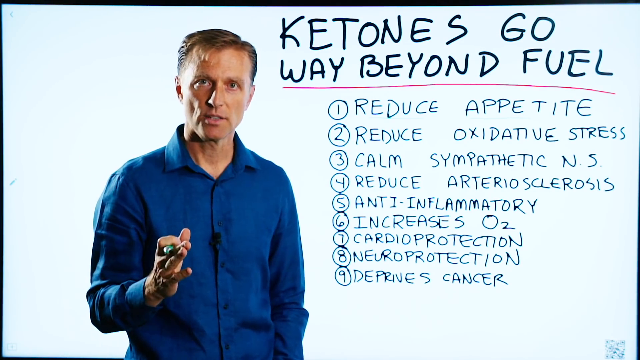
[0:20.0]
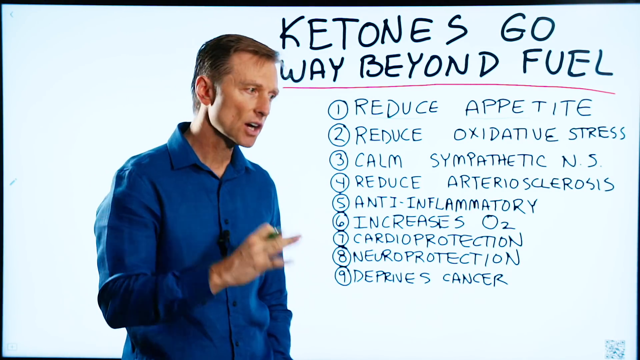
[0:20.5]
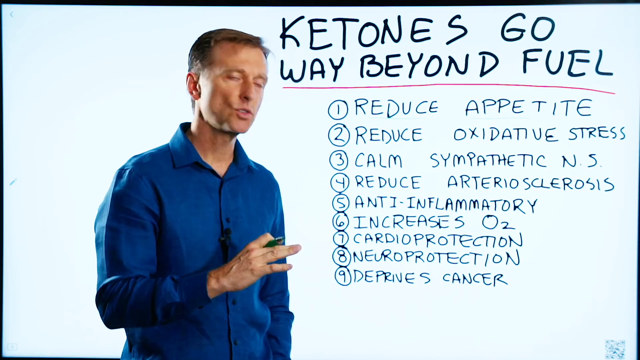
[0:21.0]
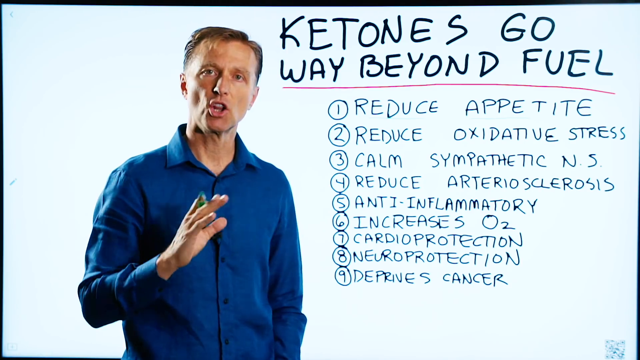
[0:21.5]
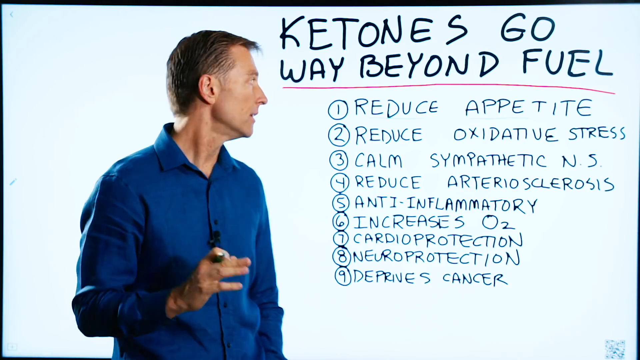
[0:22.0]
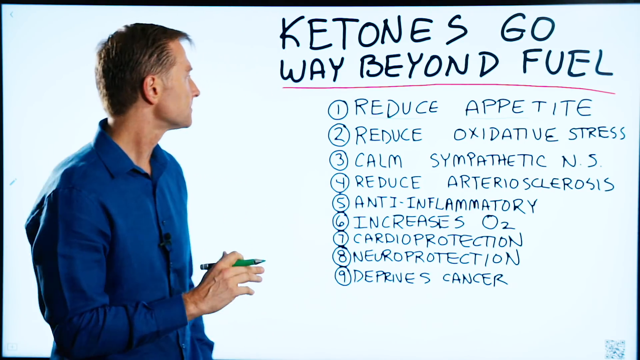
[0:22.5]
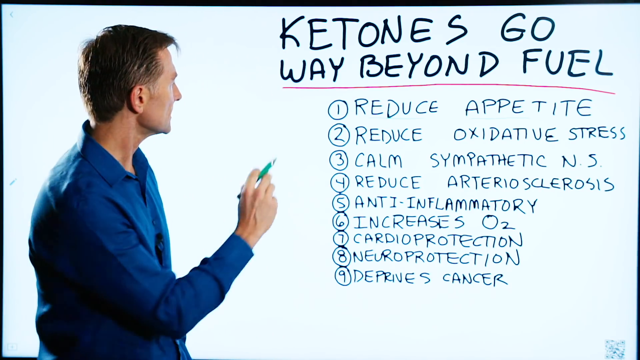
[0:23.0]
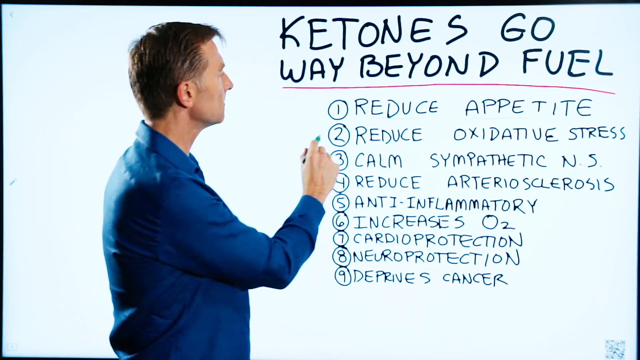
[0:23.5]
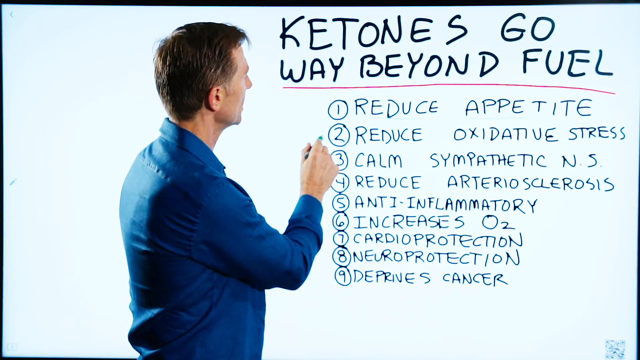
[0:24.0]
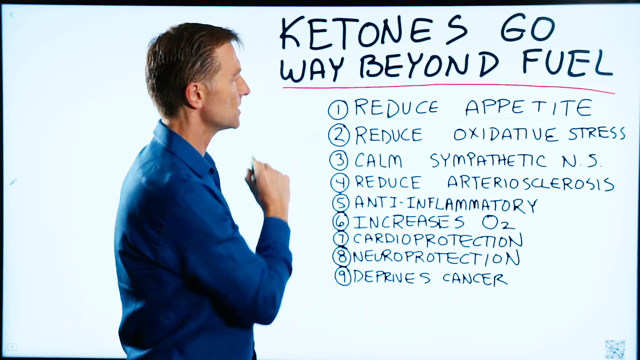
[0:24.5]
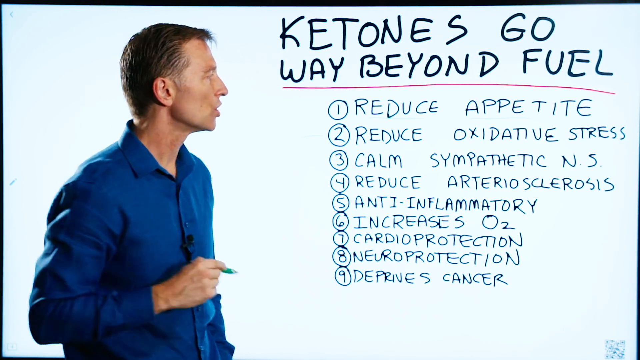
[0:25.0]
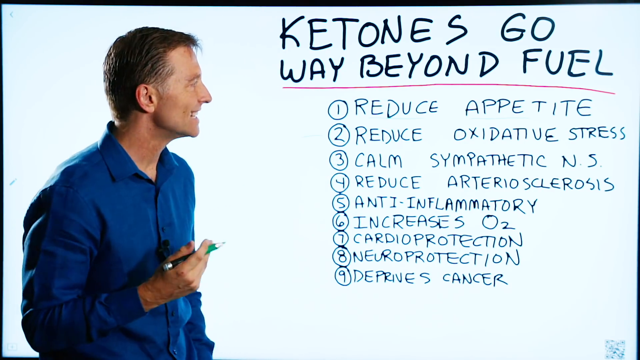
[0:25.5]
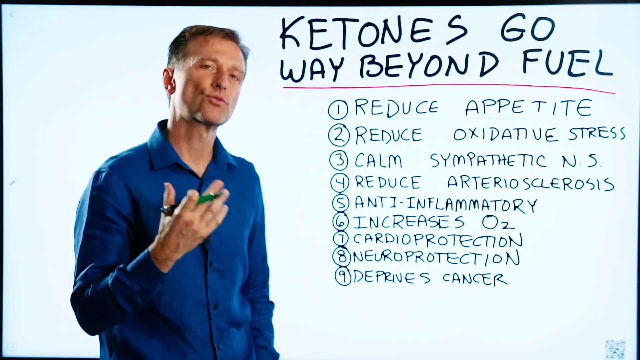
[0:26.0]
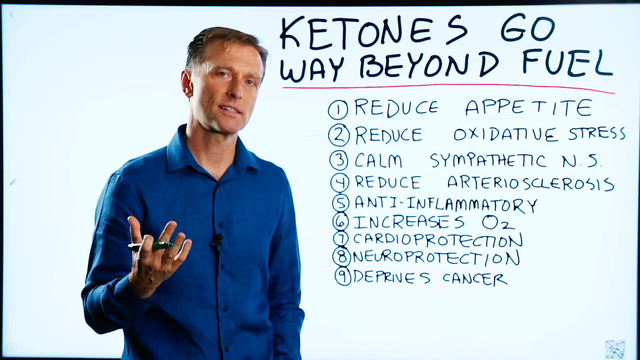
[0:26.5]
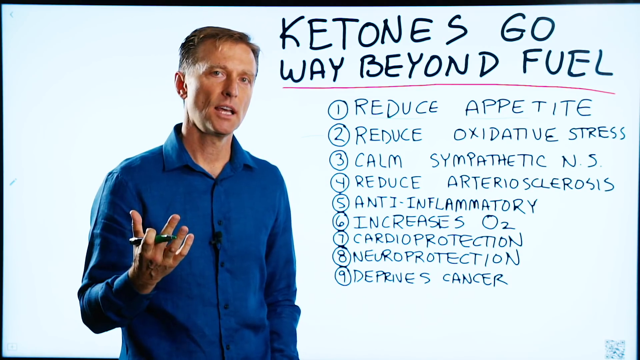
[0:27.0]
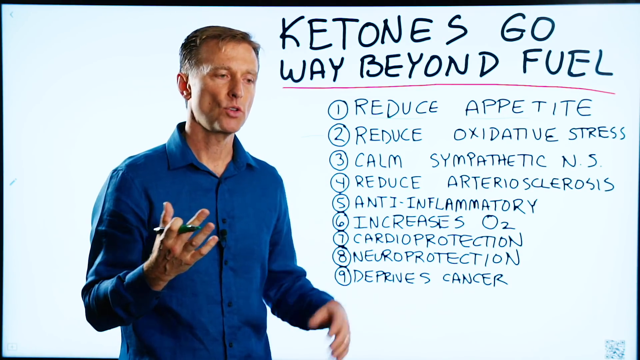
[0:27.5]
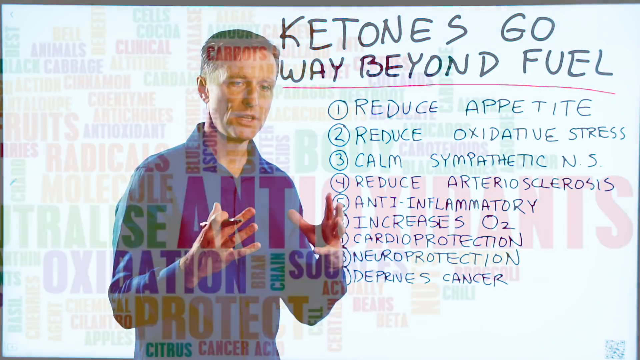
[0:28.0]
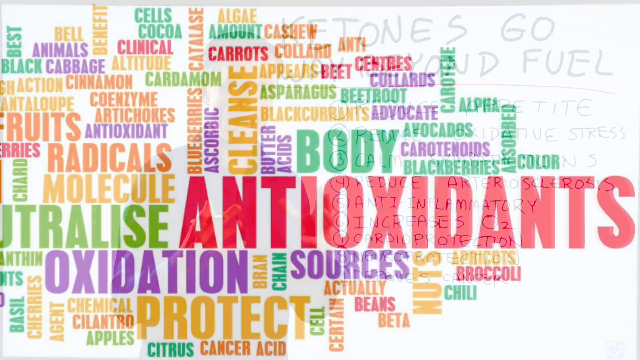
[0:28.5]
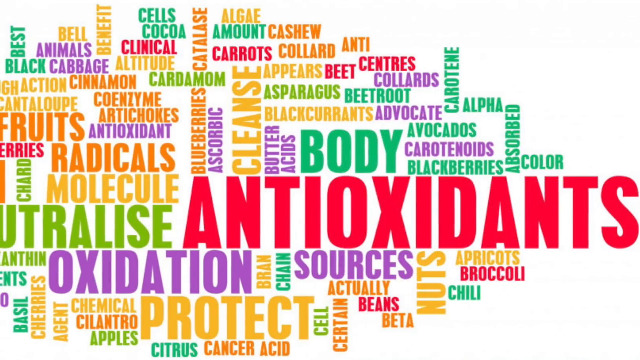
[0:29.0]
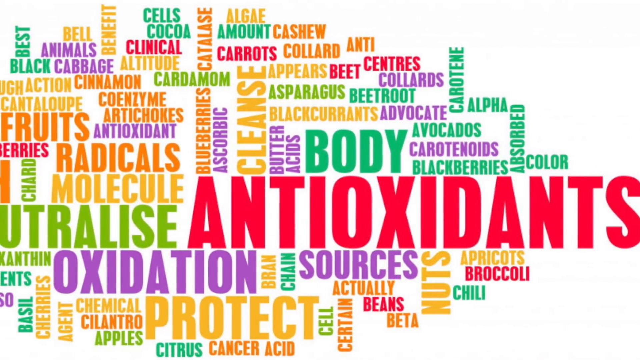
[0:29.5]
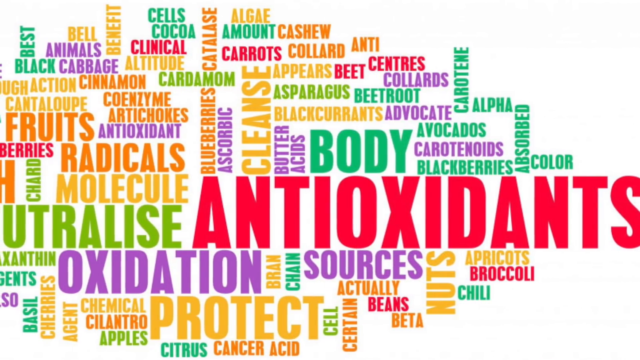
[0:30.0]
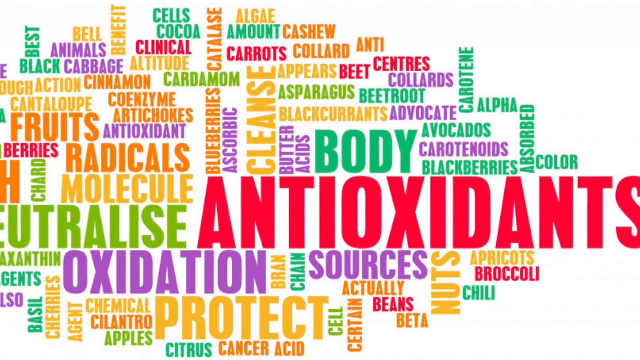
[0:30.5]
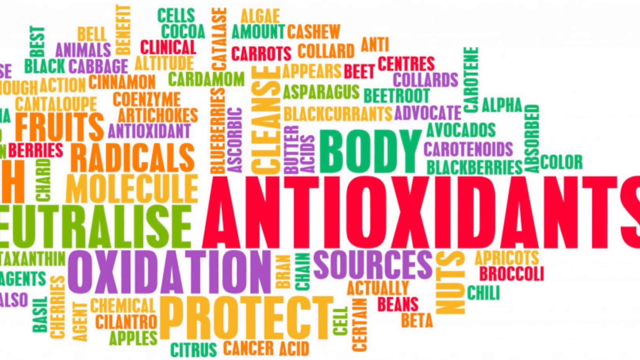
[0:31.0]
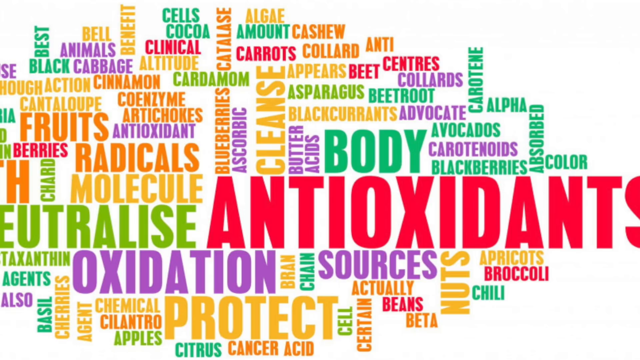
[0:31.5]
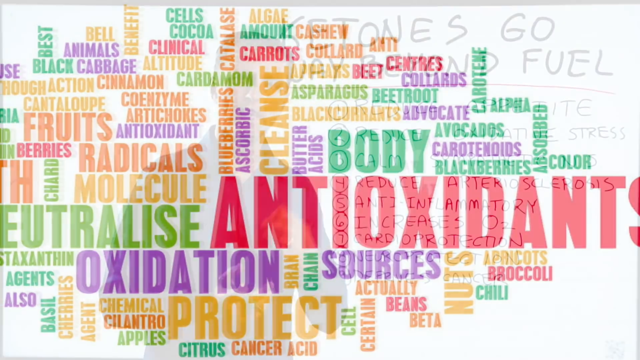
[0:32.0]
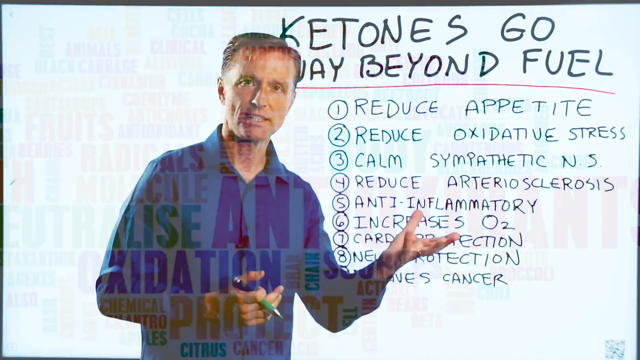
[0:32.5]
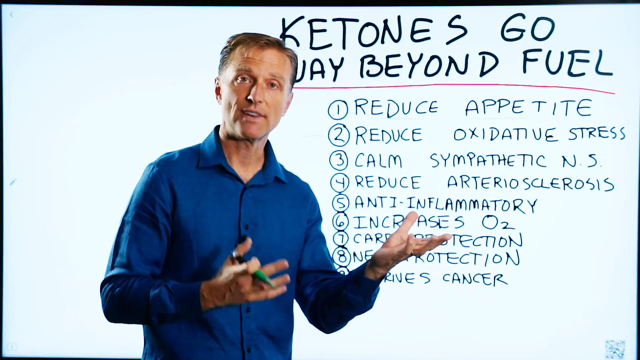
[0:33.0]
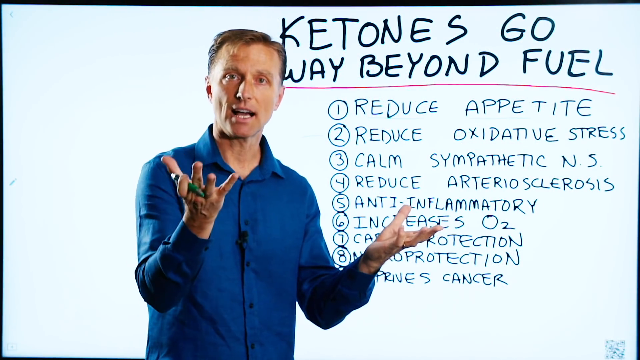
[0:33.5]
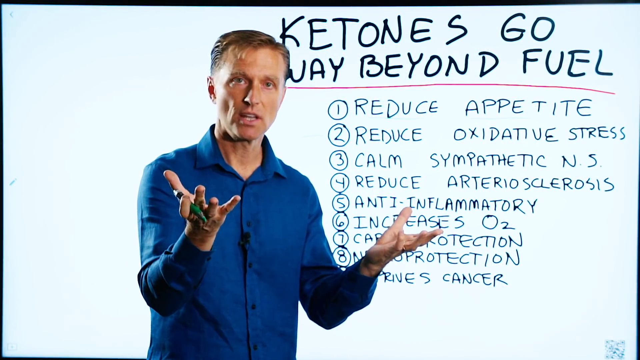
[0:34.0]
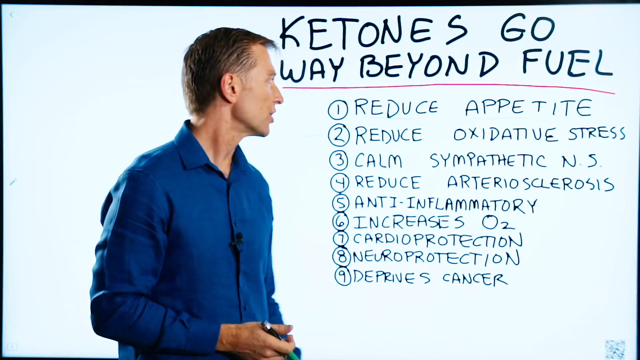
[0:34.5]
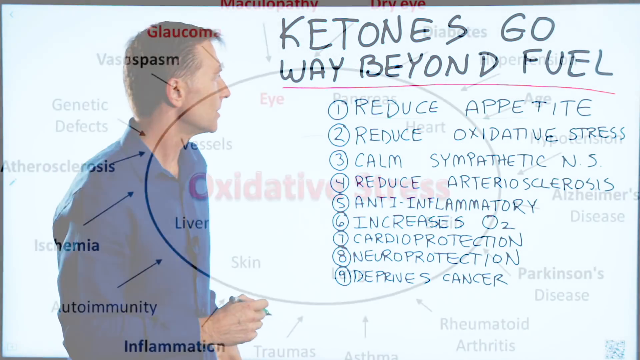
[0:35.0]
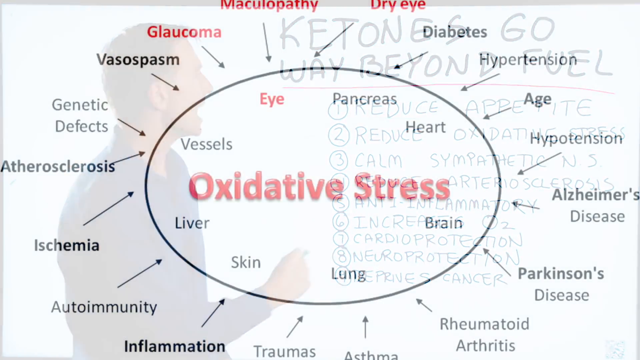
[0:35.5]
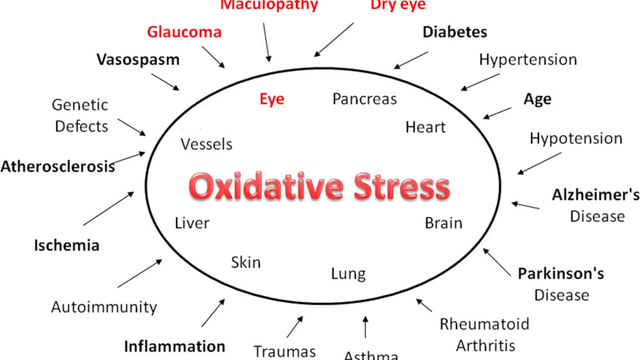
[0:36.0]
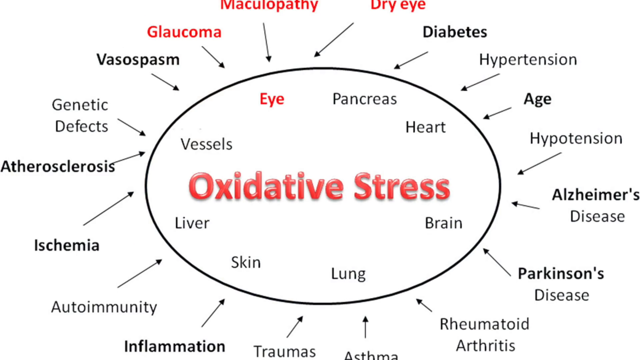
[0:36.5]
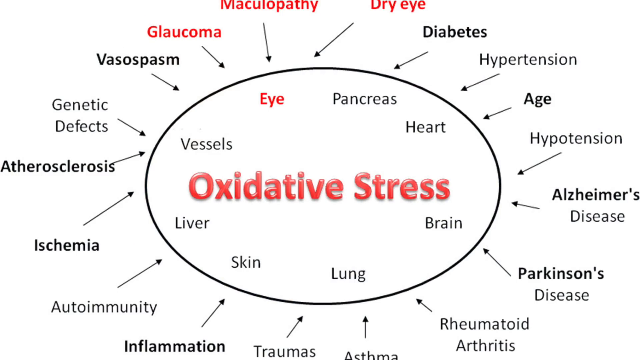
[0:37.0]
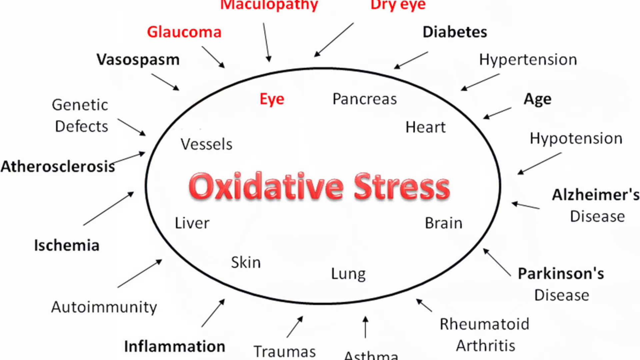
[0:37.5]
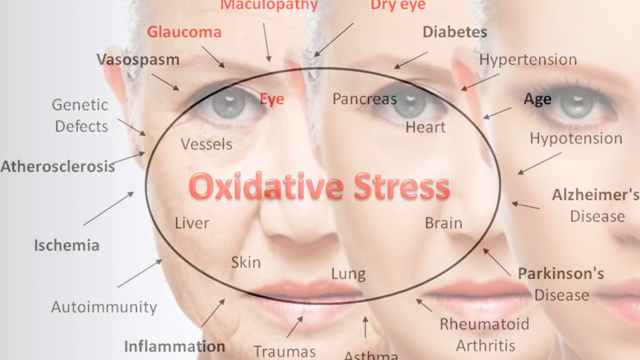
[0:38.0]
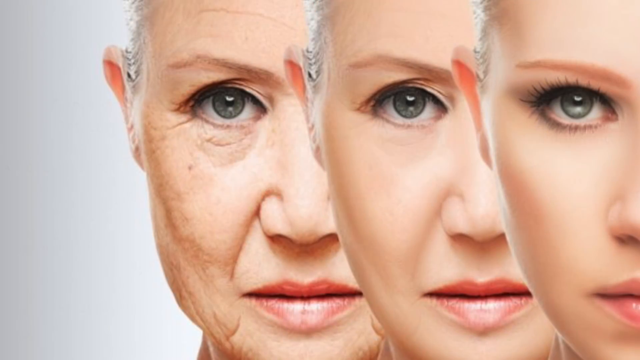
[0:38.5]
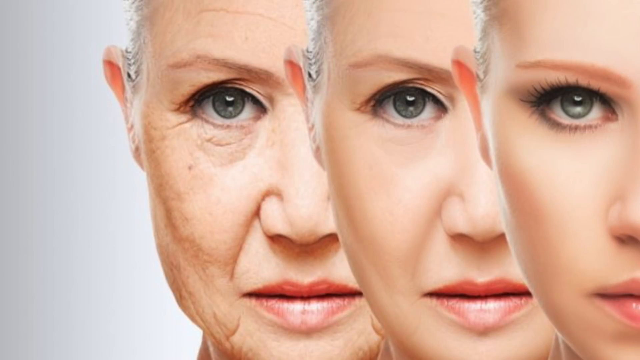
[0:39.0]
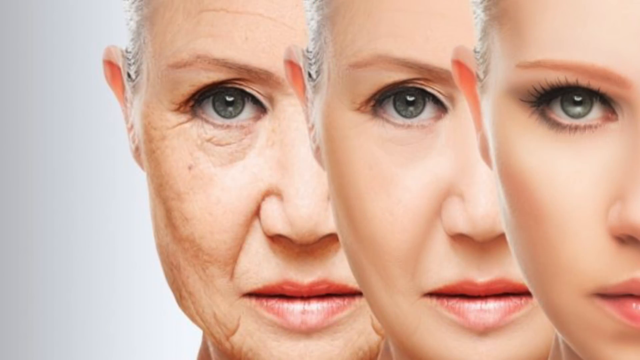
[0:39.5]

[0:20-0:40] The same list appears, and the man makes a check with a green marker. A word map of many health-related words follows, seemingly one where more frequent words appear larger; some of the main words are "antioxidants", apparently "neutralize", and "oxidation". It shows animals, cabbage, avocados and other foods, things and processes, with words in red, orange, yellow, green, purple, and a couple of different shades of green, one maybe more of a teal. The man presenting the information appears again, followed by a more detailed diagram of oxidative stress: the words eye, pancreas, heart, brain, lungs, skin, liver and vessels are inside a circle with oxidative stress, and arrows point toward that circle from words on the outside such as dry eye, diabetes, hypertension, age, hypotension, Alzheimer's disease, Parkinson's disease, ischemia, atherosclerosis, genetic defects, vasopasm and glaucoma; several words are blocked out or hard to read. Then an older person who appears to have some sort of eye issue is shown.